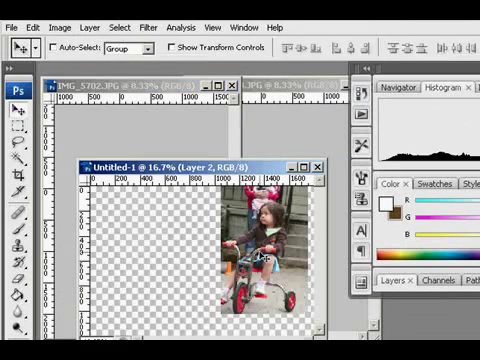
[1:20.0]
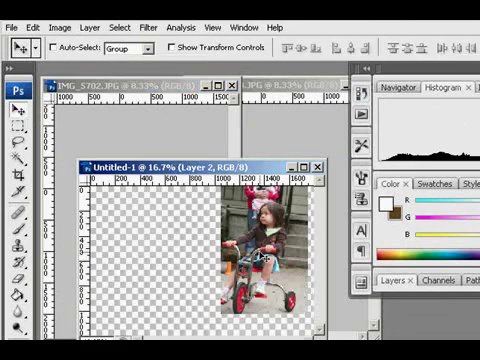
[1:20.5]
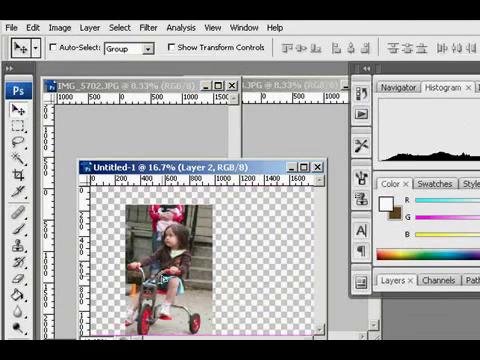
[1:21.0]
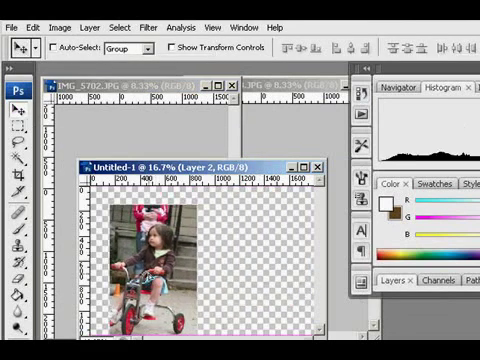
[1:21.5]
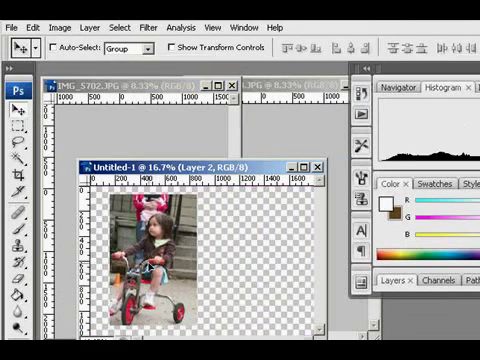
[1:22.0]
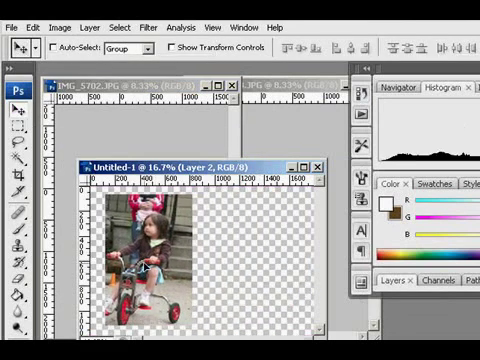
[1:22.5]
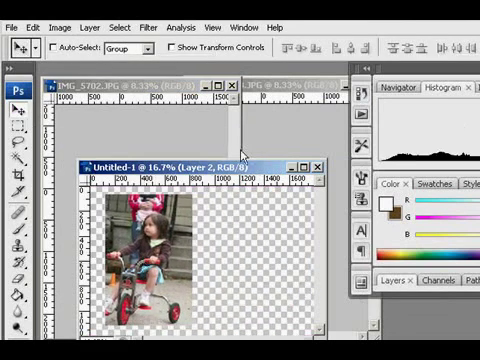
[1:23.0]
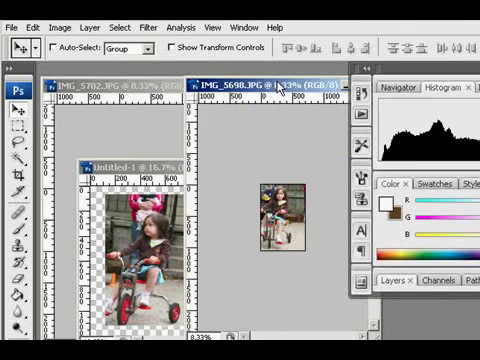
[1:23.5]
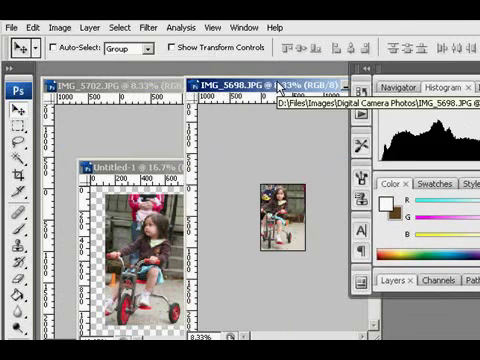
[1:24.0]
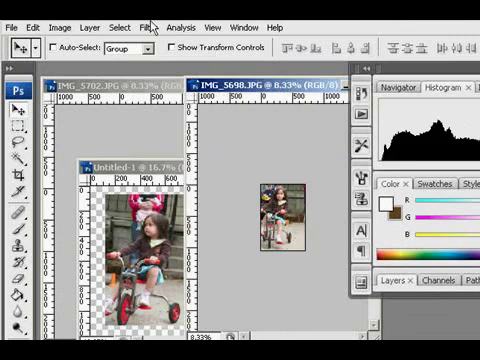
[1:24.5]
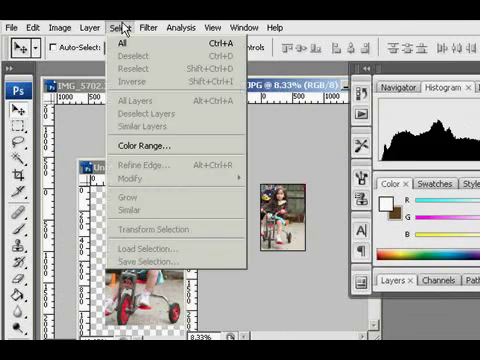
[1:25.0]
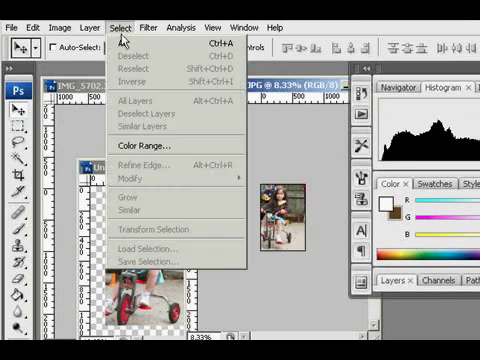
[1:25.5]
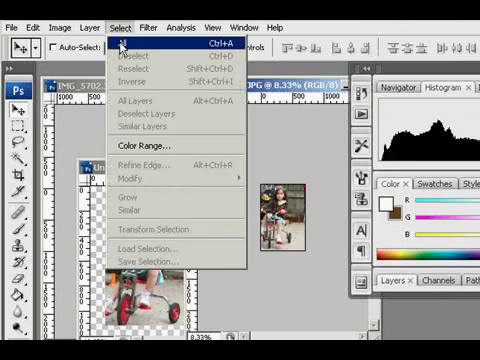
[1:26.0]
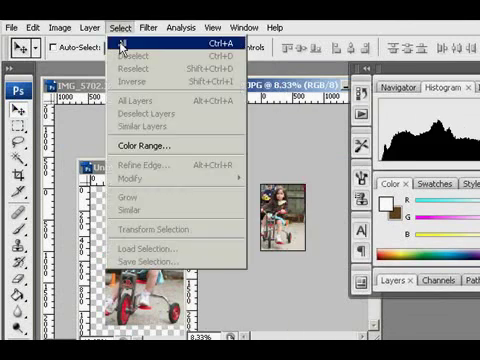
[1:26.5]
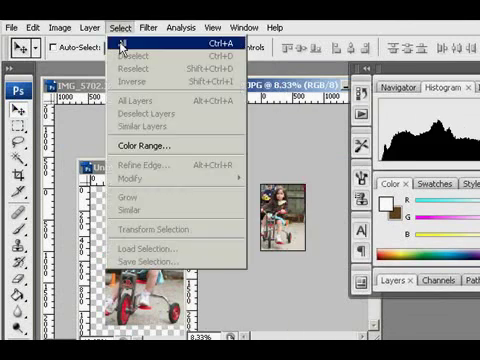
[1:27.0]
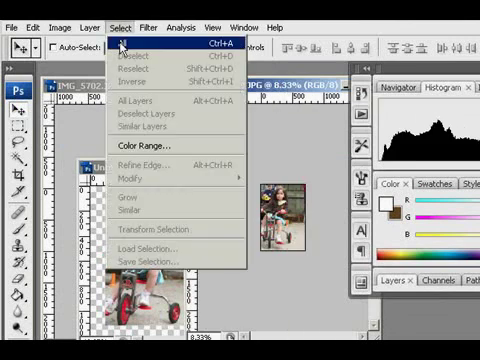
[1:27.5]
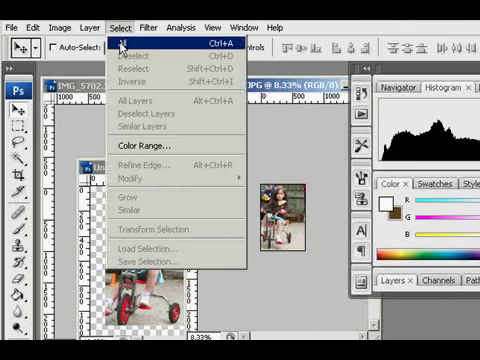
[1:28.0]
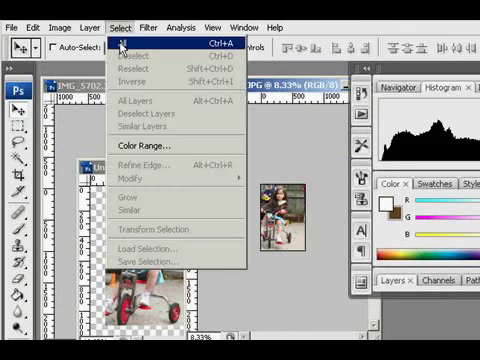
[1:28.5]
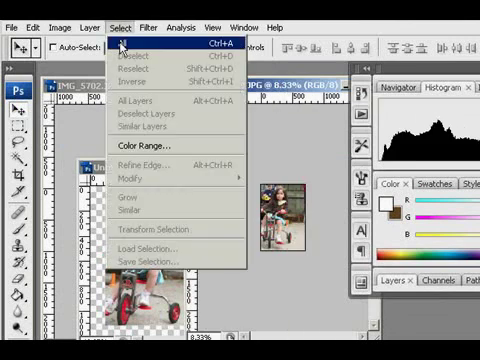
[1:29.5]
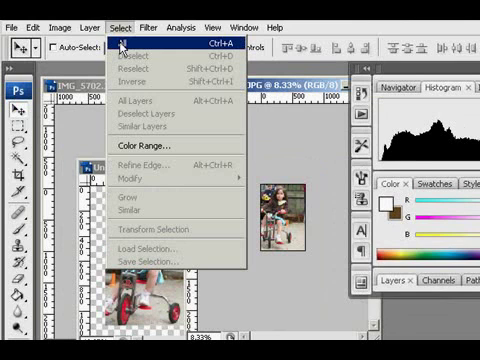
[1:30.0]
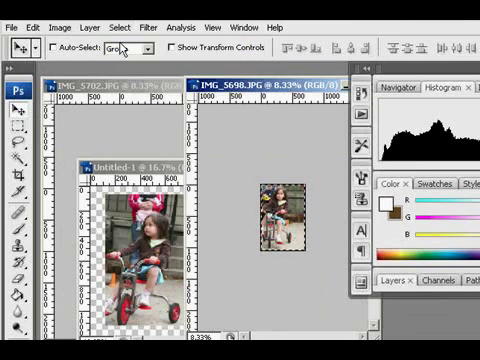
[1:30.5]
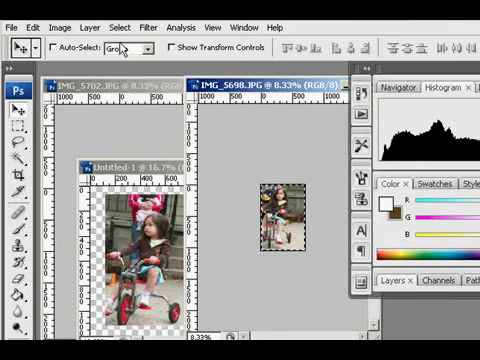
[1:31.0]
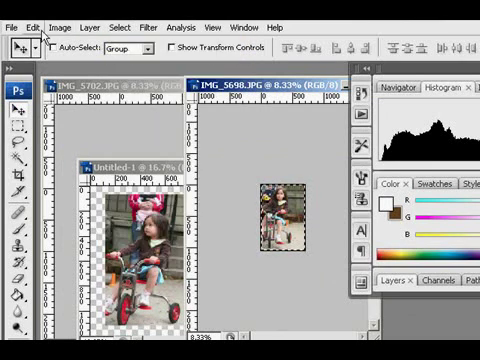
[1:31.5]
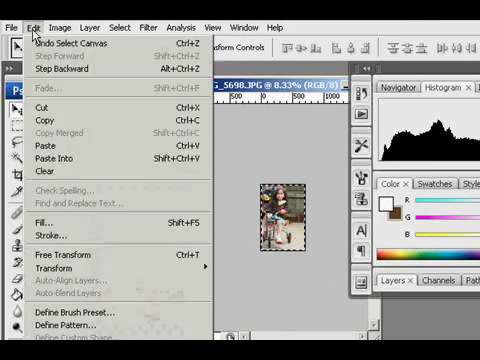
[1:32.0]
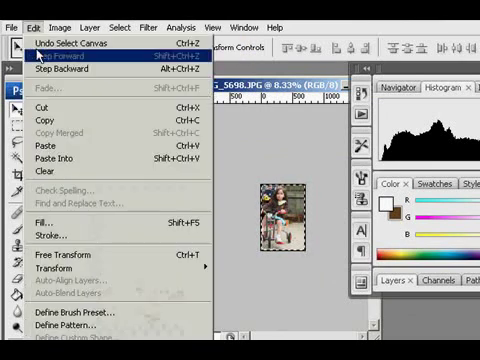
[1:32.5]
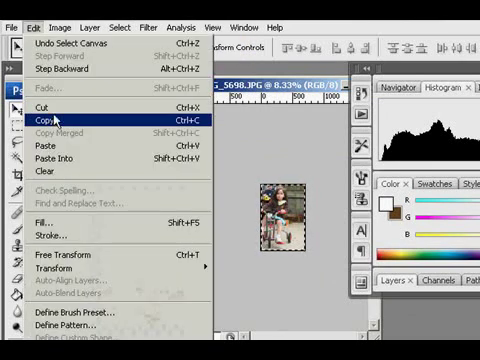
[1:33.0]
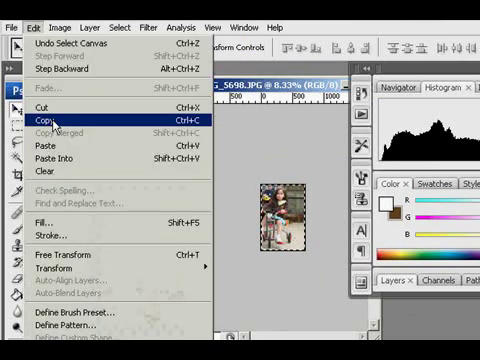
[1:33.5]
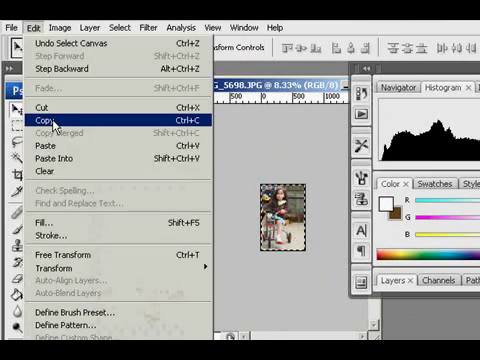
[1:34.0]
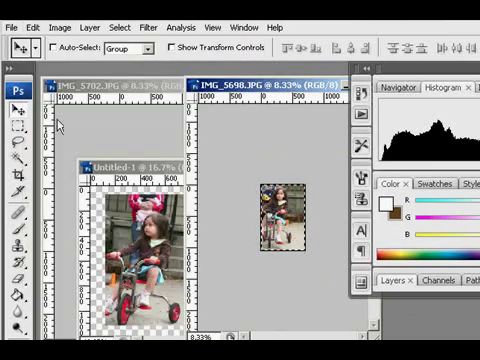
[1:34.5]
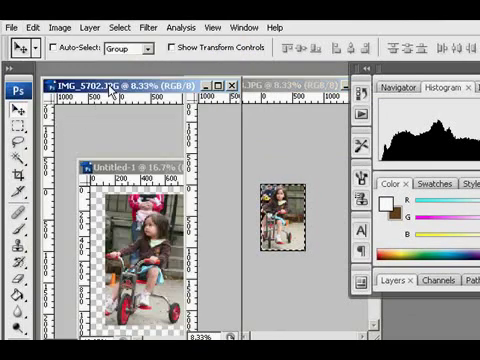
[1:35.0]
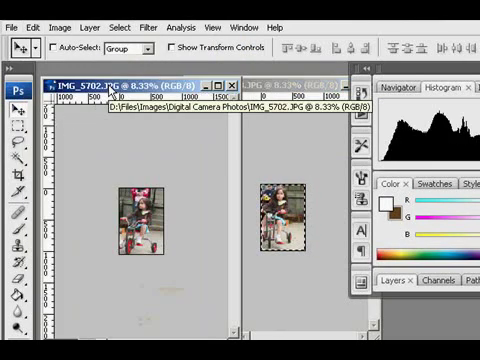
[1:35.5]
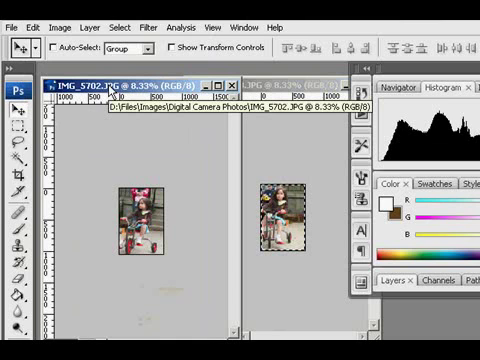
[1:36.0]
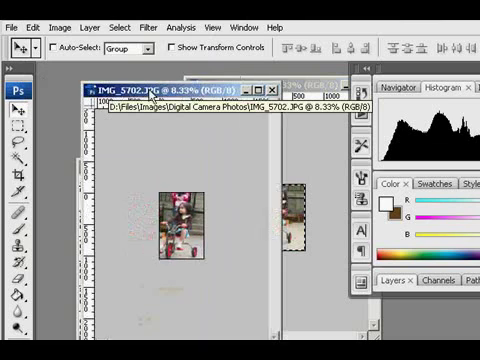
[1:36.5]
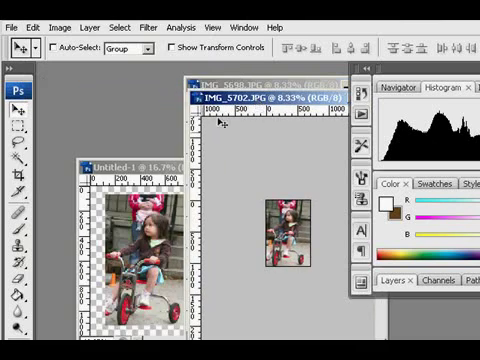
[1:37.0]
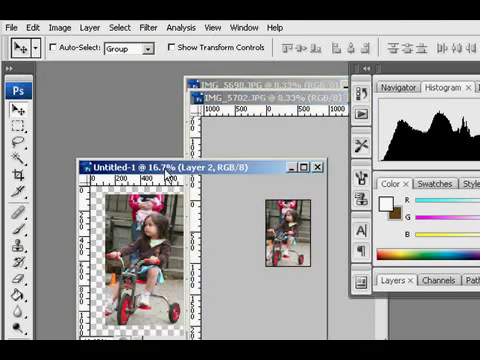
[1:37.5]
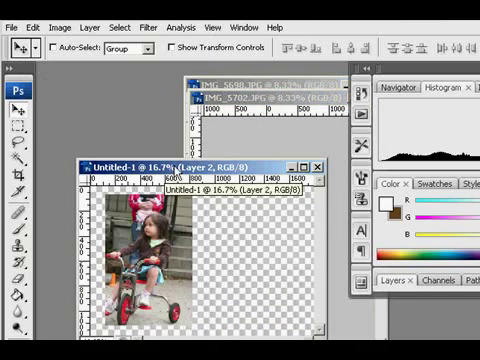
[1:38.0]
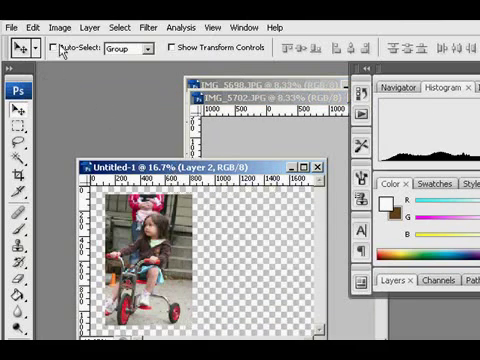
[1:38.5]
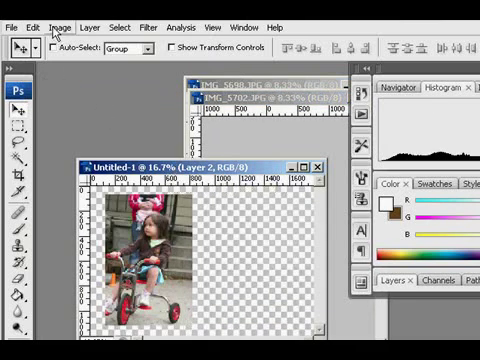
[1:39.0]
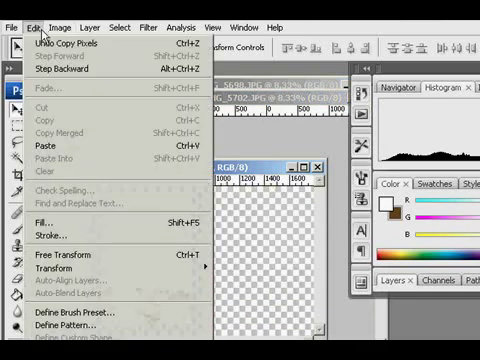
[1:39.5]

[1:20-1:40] The user moves the image around on the screen, pushing it toward the left-hand margin. They go to select and click on all, selecting the second image, copy it, and then paste it, apparently into the same image as the first photo of the girl riding the tricycle, so that both separate images are combined onto one page.